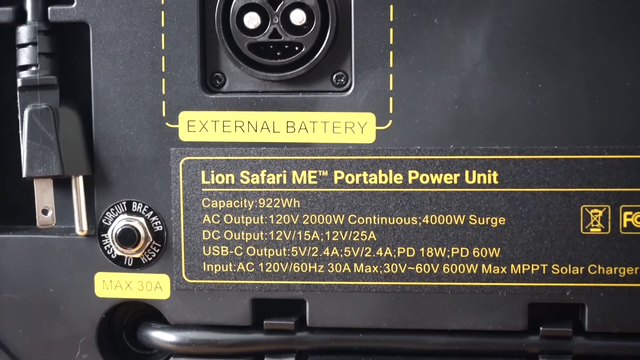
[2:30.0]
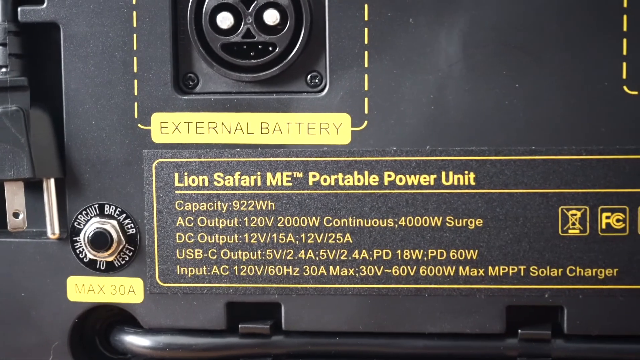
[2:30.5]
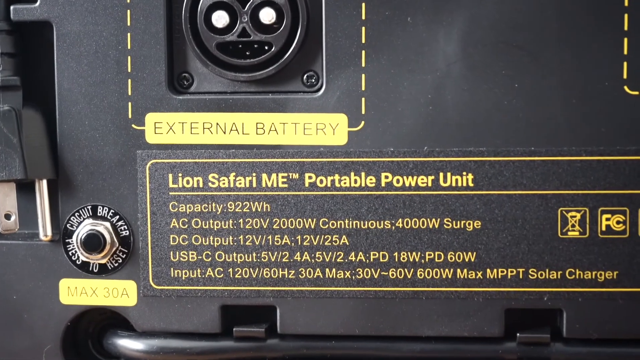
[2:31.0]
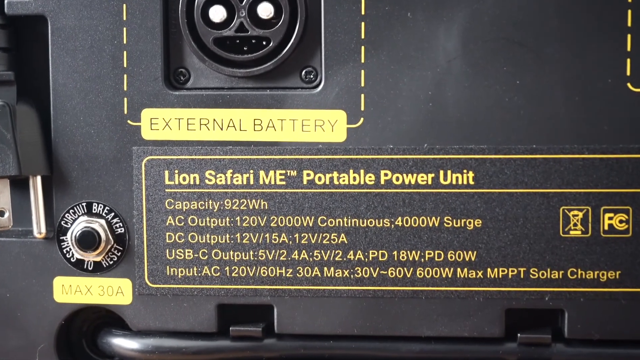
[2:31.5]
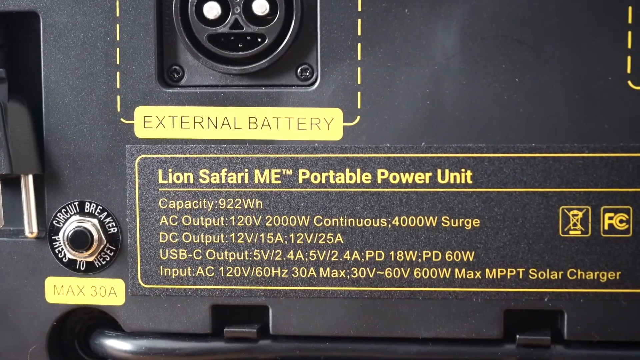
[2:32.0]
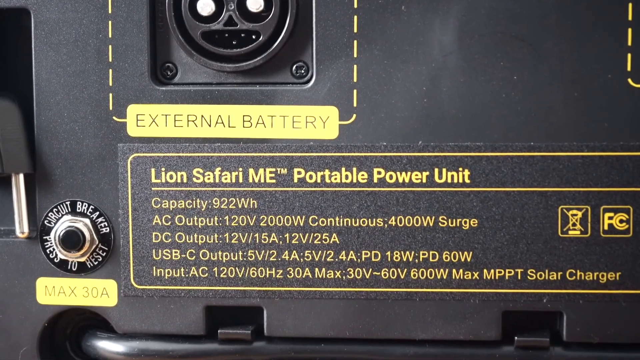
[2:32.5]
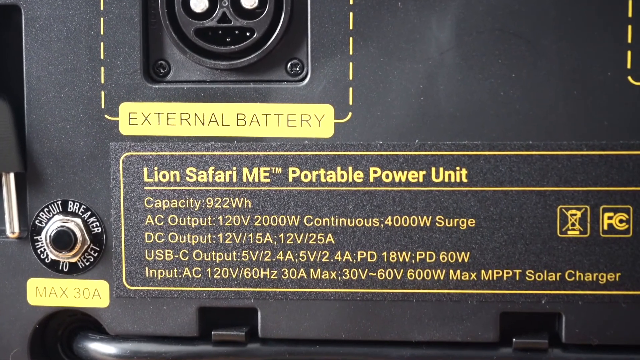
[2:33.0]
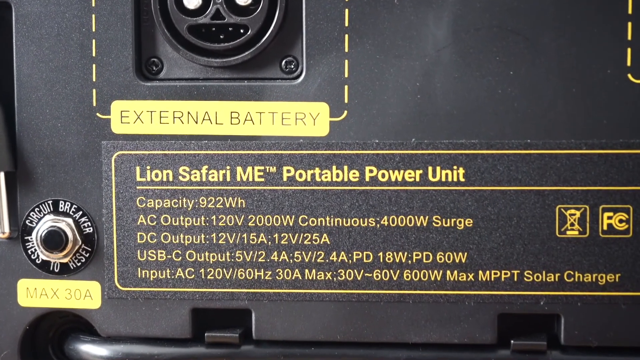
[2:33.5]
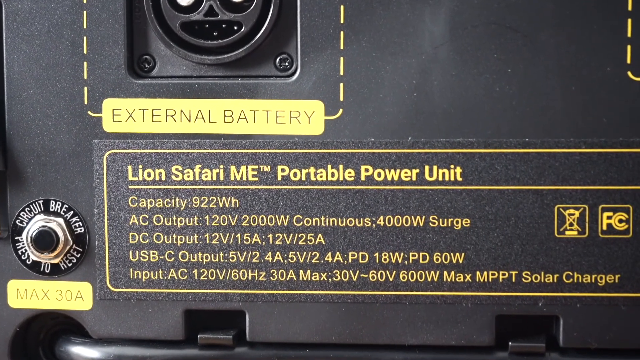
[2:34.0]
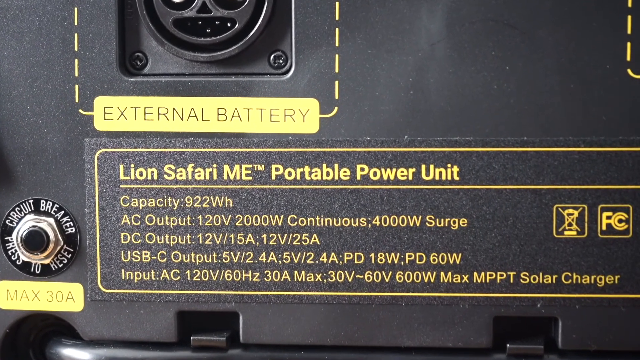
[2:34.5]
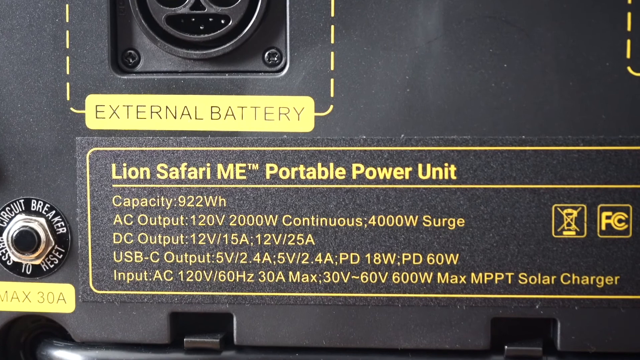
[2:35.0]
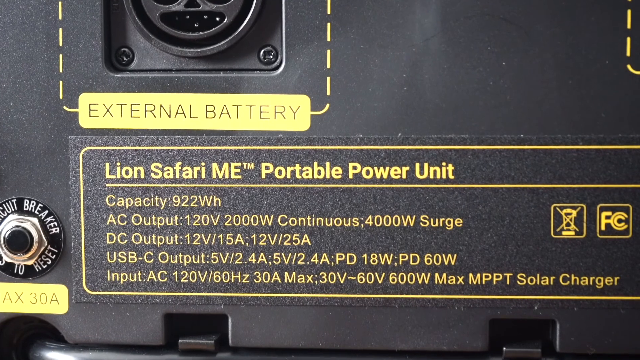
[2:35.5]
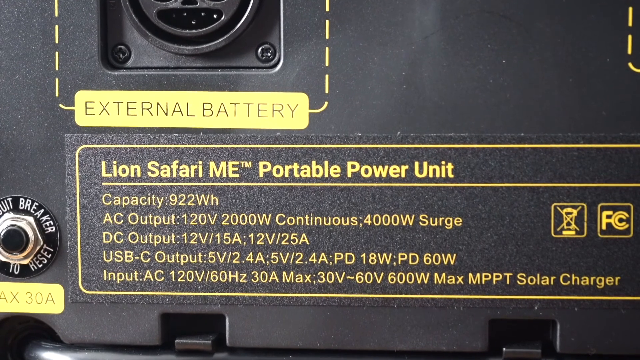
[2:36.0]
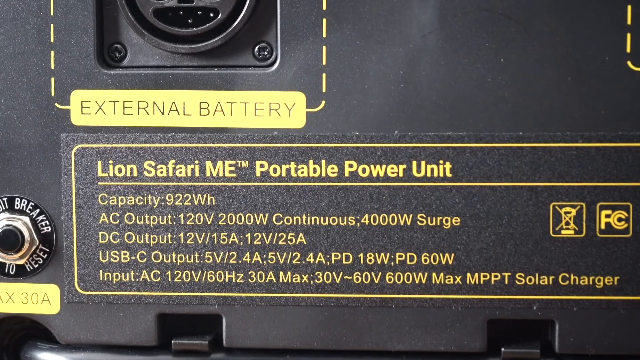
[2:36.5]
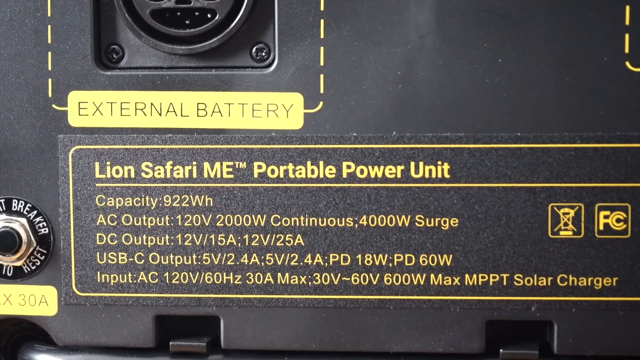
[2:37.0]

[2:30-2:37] Text on the back of the machine is shown, with the external battery and a circuit breaker section to reset that says "max is 30A." Text says "Lion Safari ME Portable Power Unit, Capacity 922WH, AC Output 120V 2000W Continuous, 4000W Surge, DC Output 12V 15A, 12V 25A, USB-C Output 5V 2.4A, 5V 2.4A, PD 18W, PD 60W, Input AC 120V 60HZ, 30A Max, 30V to 60V 600W Max, MPPT Solar Charger." The view slowly zooms into that section before the video ends.